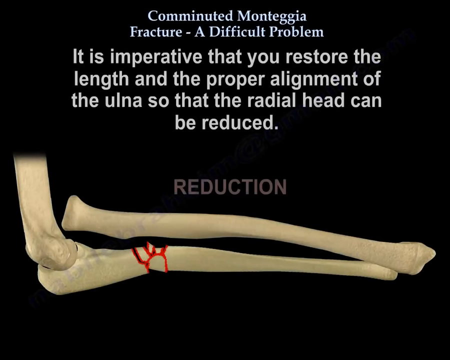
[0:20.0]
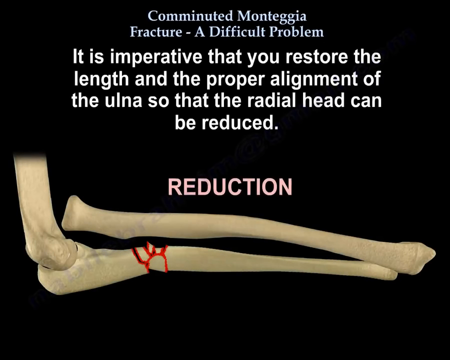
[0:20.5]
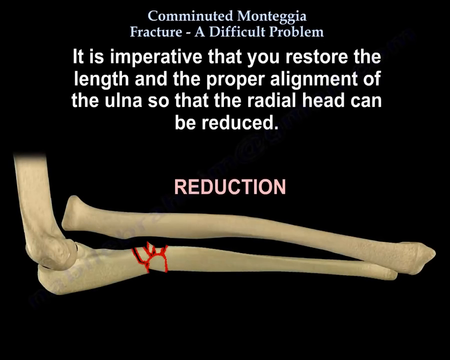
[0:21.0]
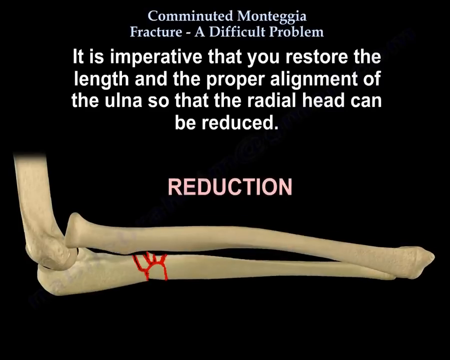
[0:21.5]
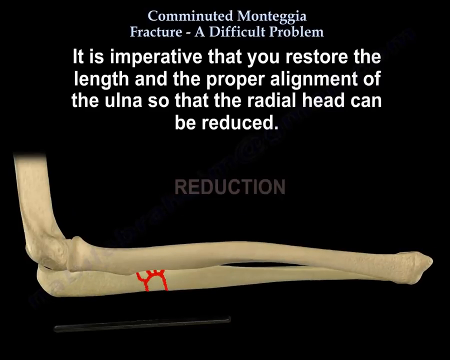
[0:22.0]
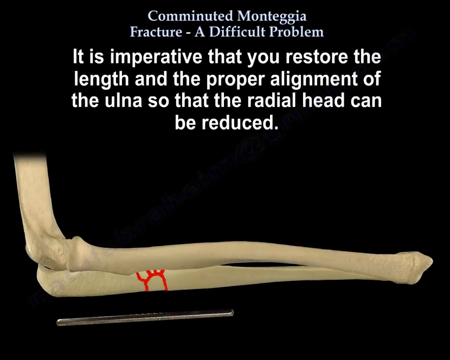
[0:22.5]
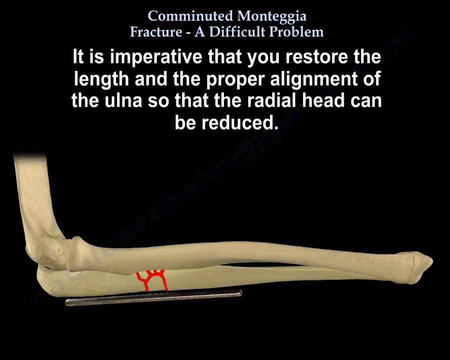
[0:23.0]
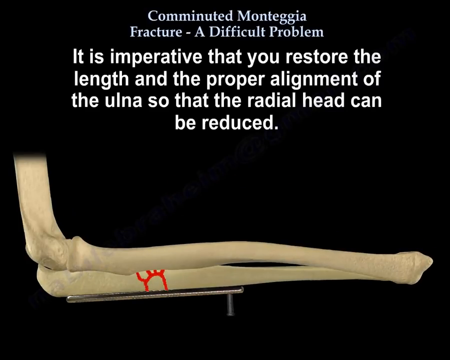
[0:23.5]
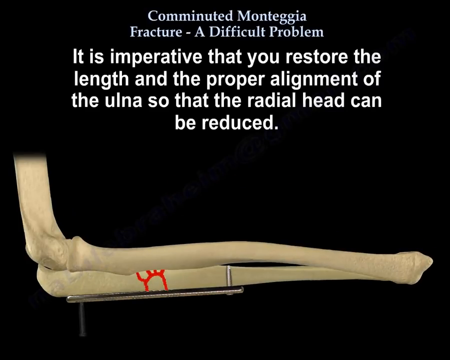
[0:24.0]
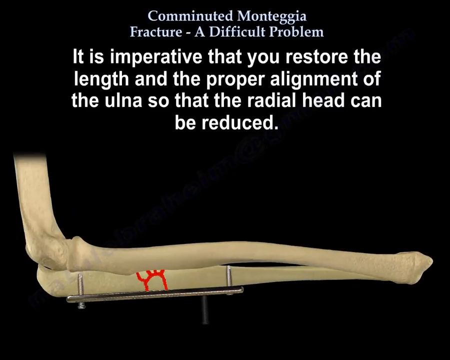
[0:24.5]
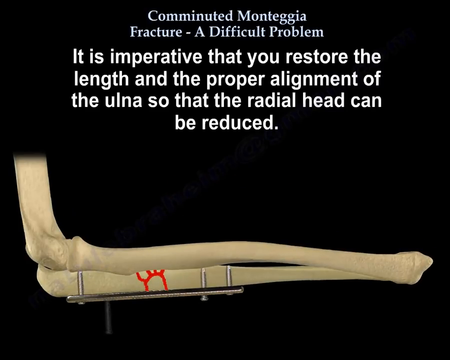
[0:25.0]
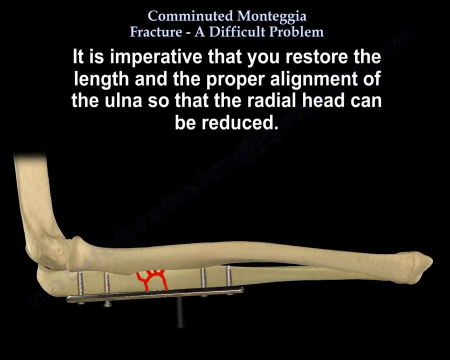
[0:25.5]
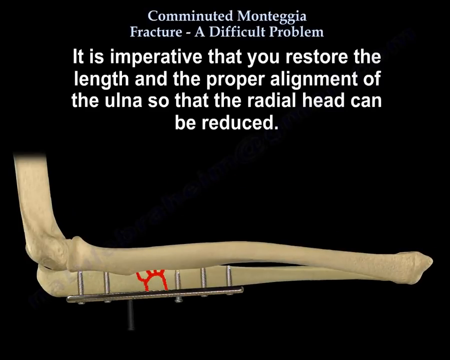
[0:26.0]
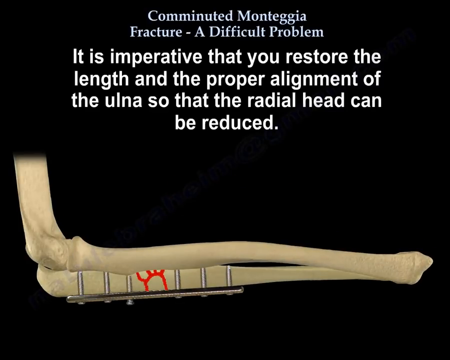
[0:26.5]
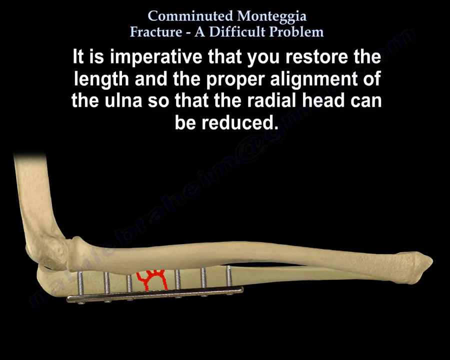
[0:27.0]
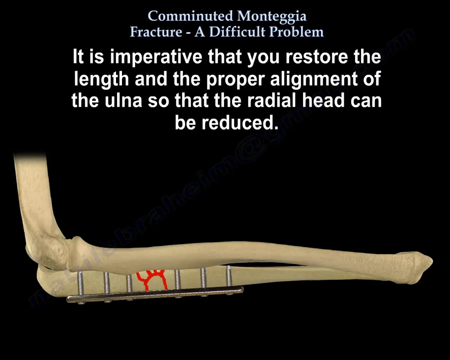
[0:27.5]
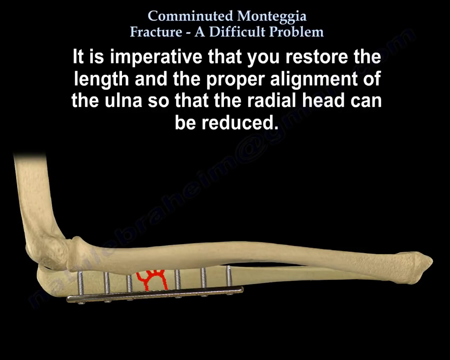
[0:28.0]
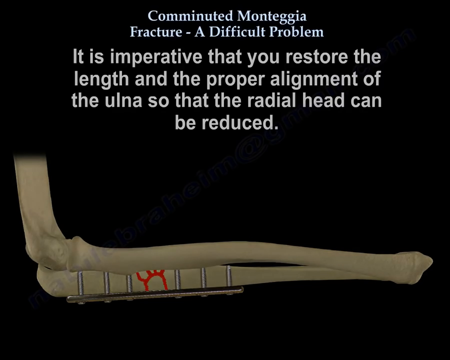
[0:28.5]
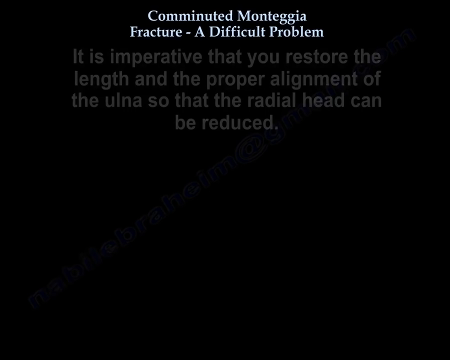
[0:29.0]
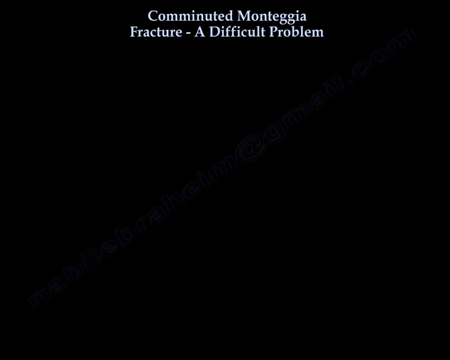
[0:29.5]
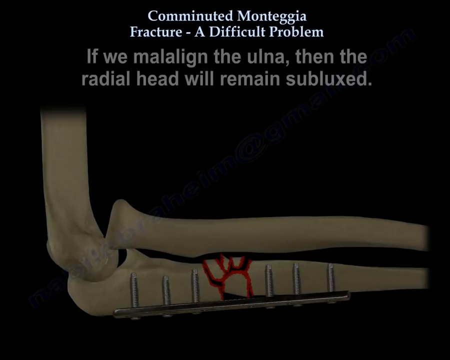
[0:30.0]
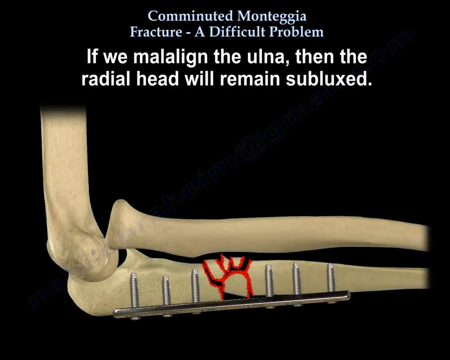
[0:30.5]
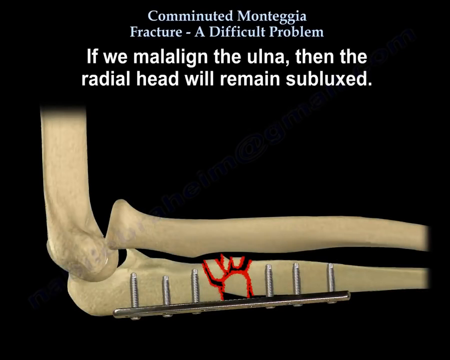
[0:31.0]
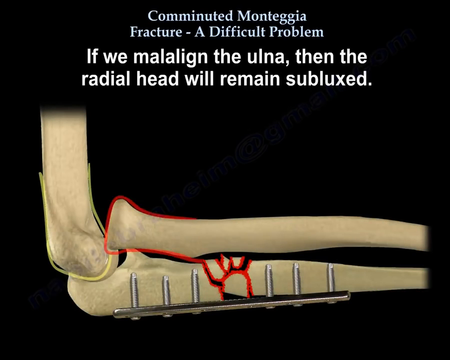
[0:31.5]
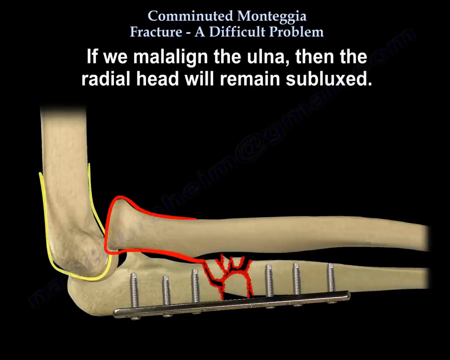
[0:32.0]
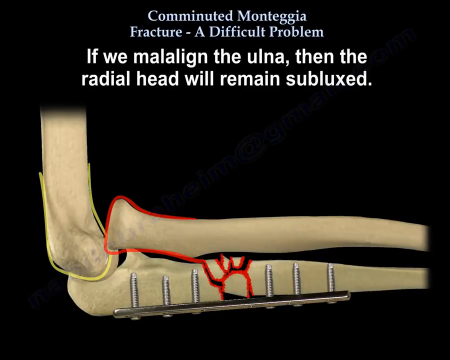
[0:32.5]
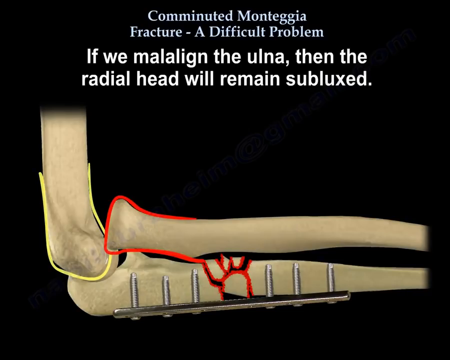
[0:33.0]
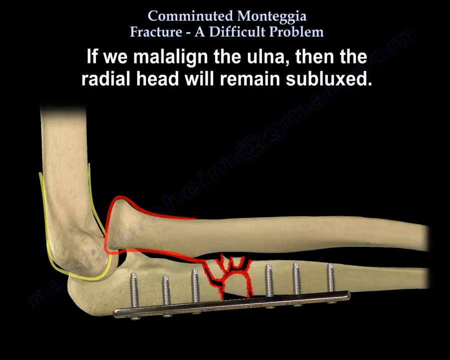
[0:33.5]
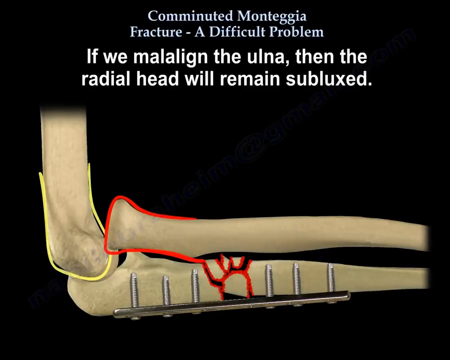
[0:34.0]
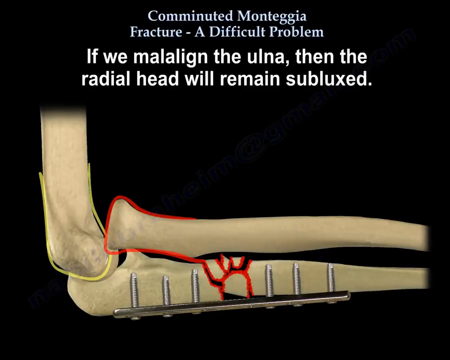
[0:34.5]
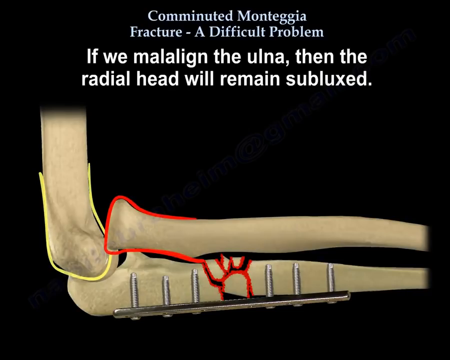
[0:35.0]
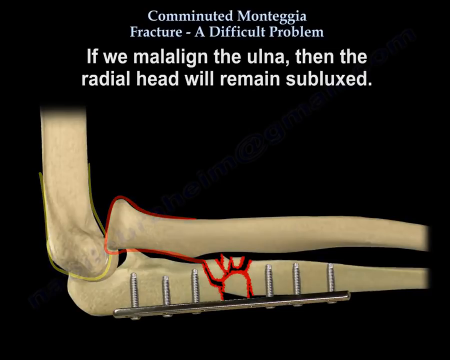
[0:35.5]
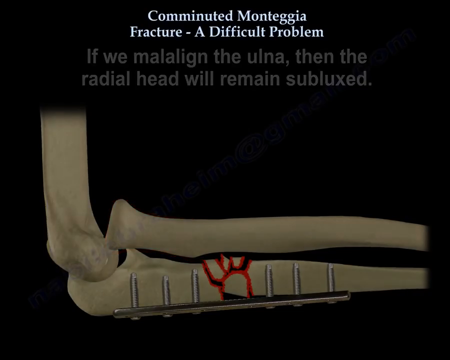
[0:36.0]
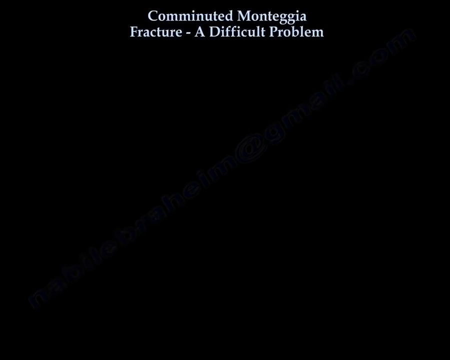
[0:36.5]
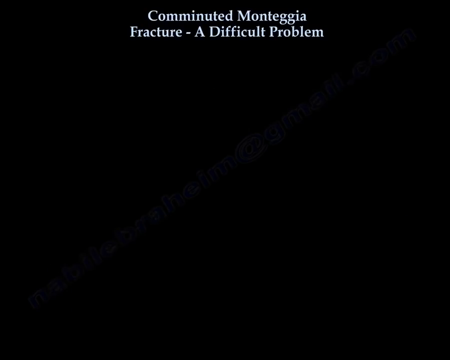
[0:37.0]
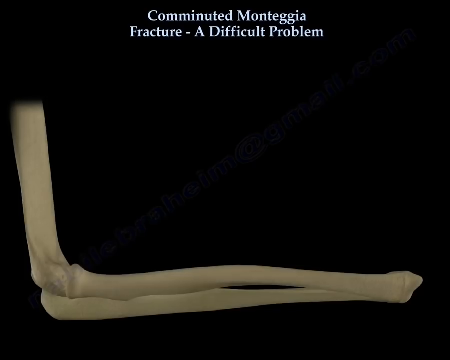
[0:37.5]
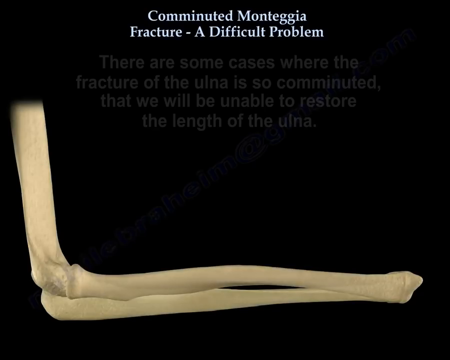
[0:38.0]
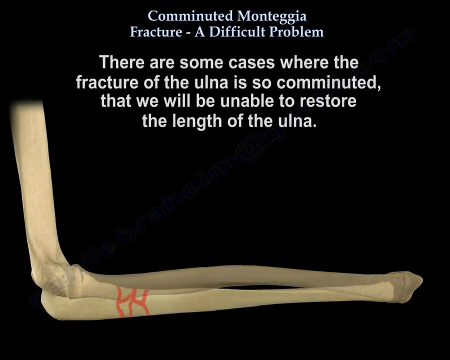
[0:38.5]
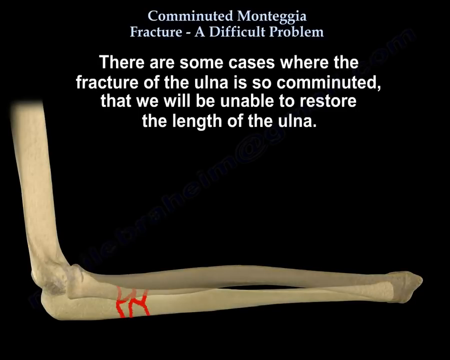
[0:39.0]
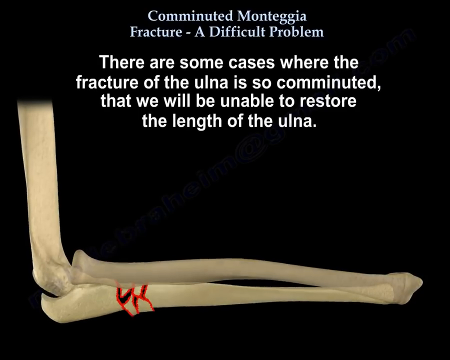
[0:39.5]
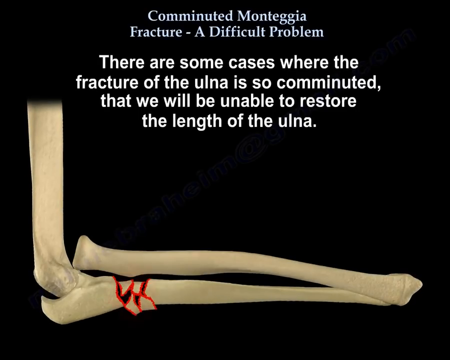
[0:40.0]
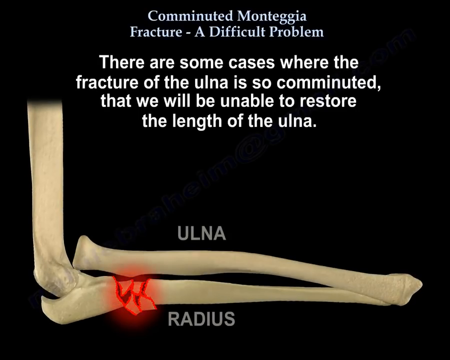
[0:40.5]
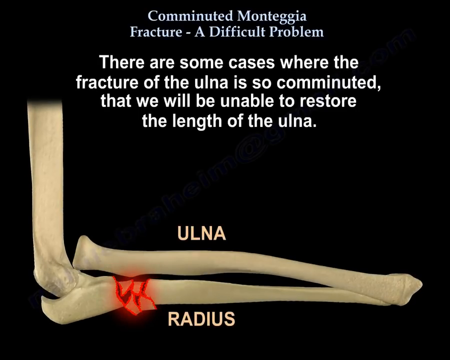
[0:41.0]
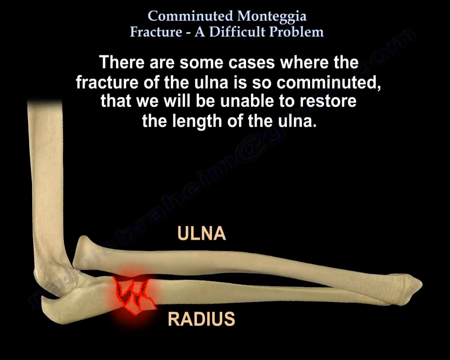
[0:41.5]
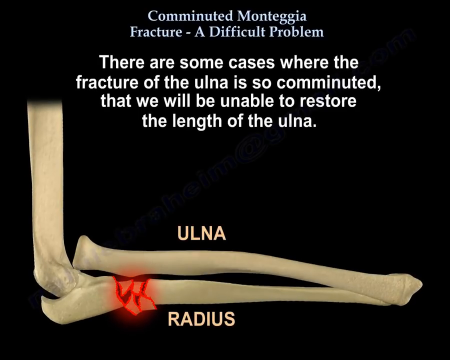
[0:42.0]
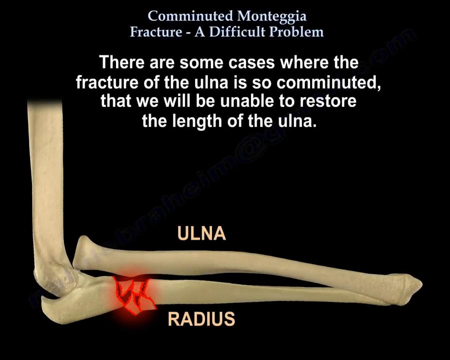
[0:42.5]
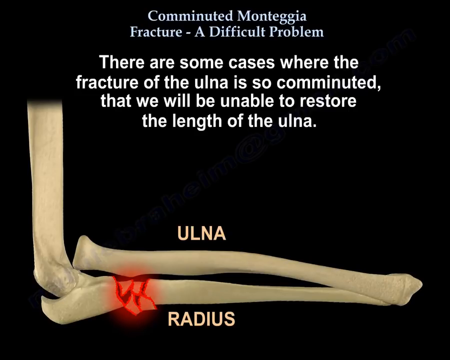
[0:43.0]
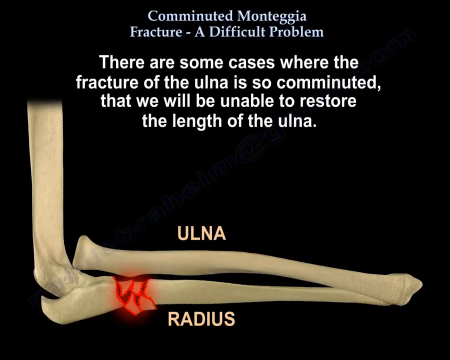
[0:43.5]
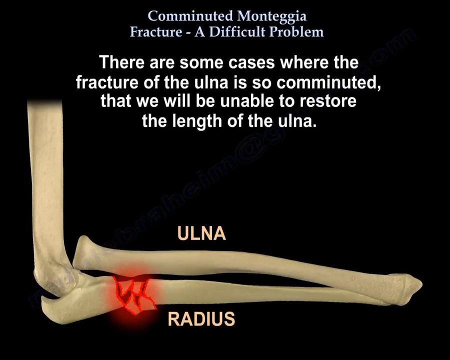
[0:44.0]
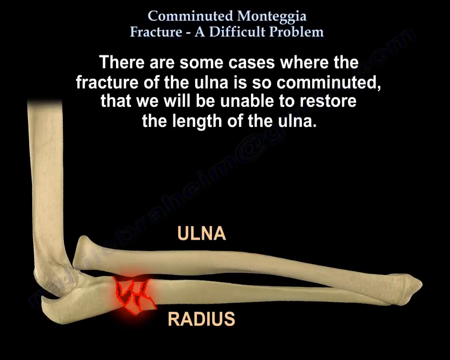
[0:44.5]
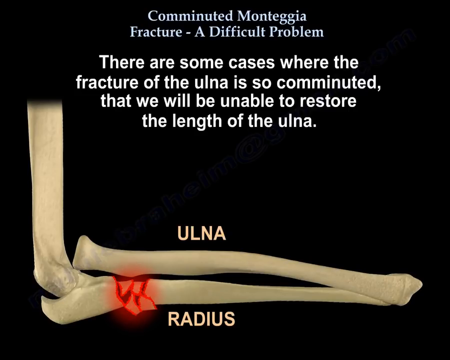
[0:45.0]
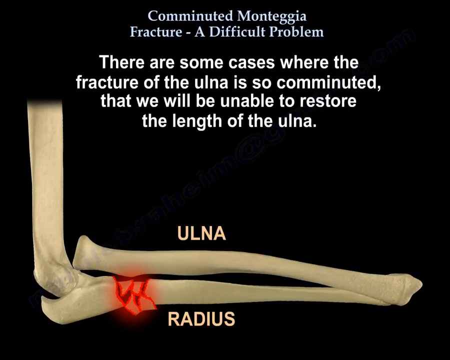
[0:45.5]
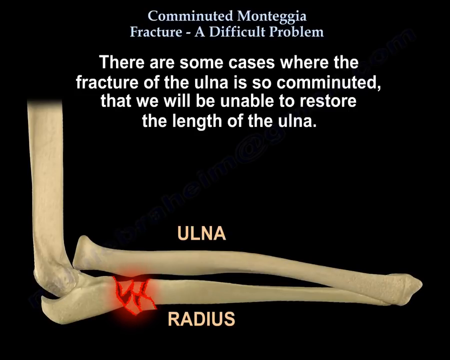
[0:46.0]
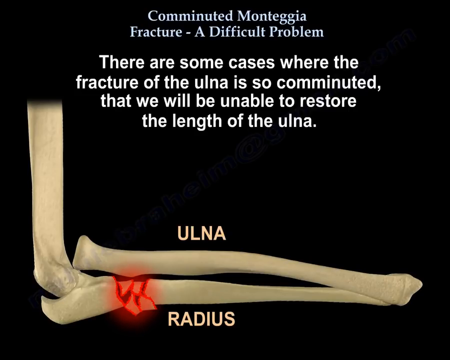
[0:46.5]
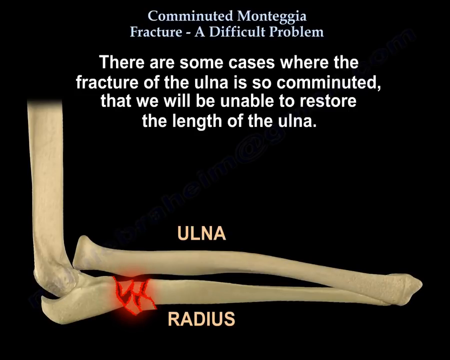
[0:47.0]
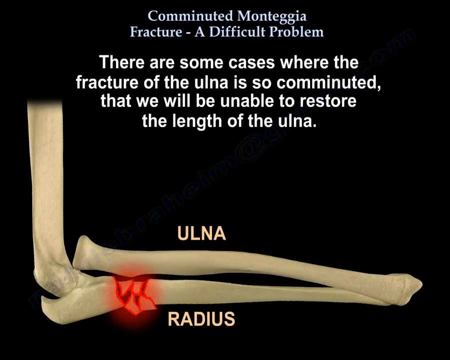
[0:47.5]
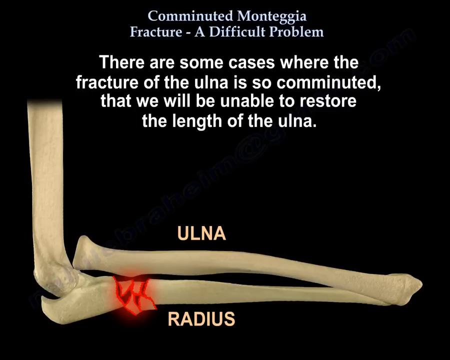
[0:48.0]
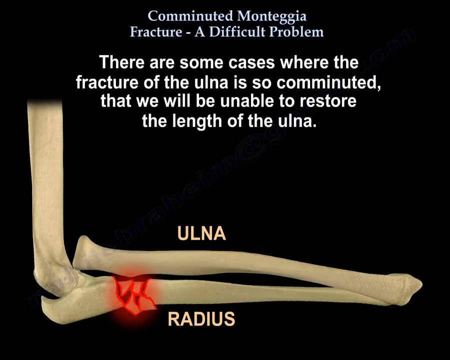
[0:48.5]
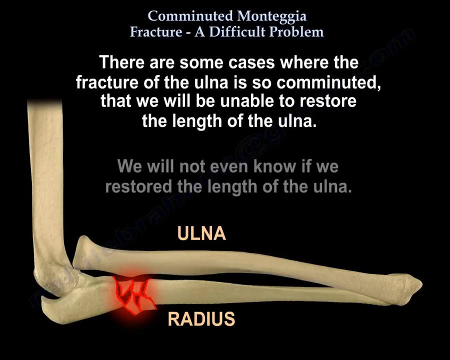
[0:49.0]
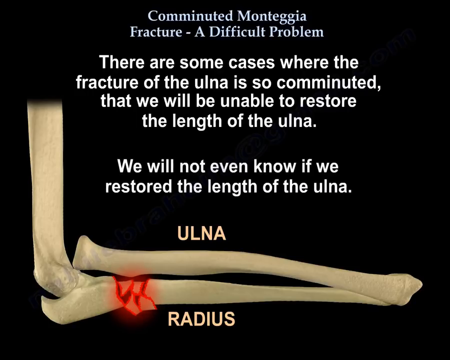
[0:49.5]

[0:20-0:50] The graphic shows the bent elbow fracture: a horizontal bottom bone with a horizontal top bone above it, and about a quarter of the way along the bottom bone a red border surrounds what looks like a bad break. Below the heading and above the arm graphic, further white text on the black background reads "it is imperative that you restore the length and the proper alignment of the ulna so that the radial head can be reduced." Below that, still above the graphic, the word "reduction" appears in gray font, then becomes brighter white and flashes before disappearing. What looks like a metal rod is then attached at the bottom of the bottom horizontal bone, and screws are pushed through, three on the left-hand side of the fracture and three on the right-hand side. This appears to close the distance between the bottom bone and the top bone. The text then reads "if we mal-align the ulna, then the radial head will remain subluxed."